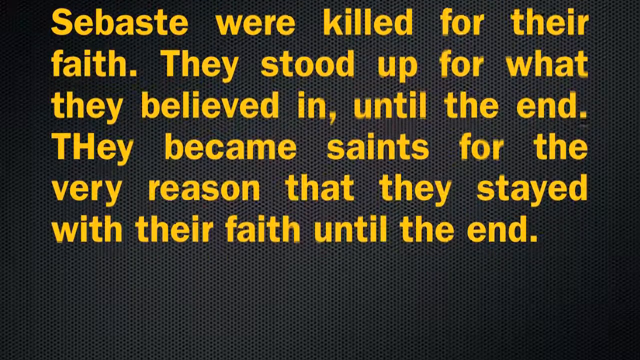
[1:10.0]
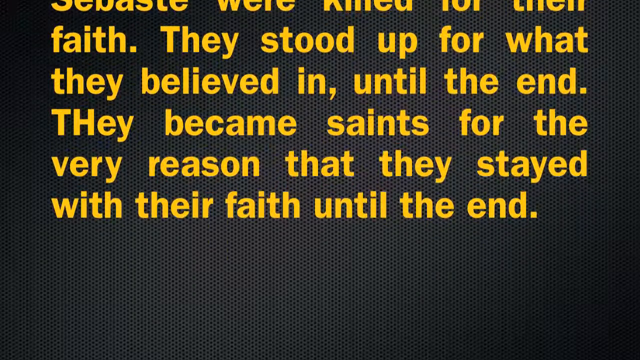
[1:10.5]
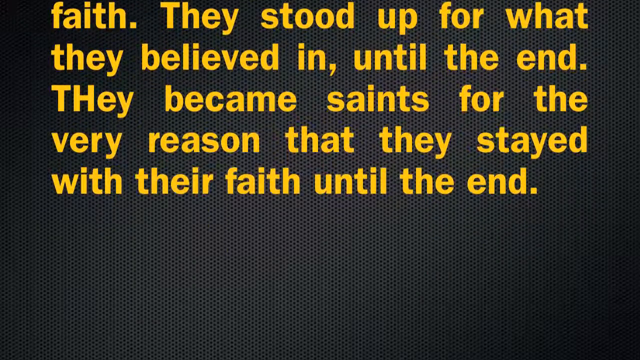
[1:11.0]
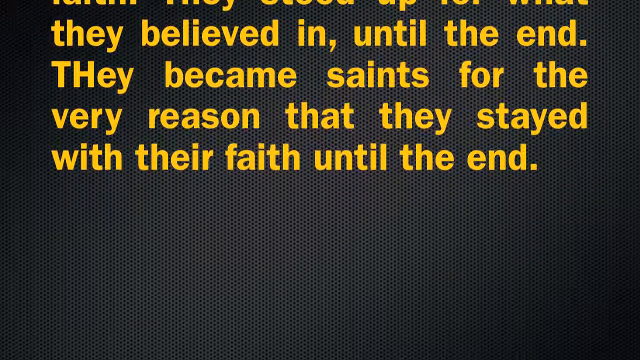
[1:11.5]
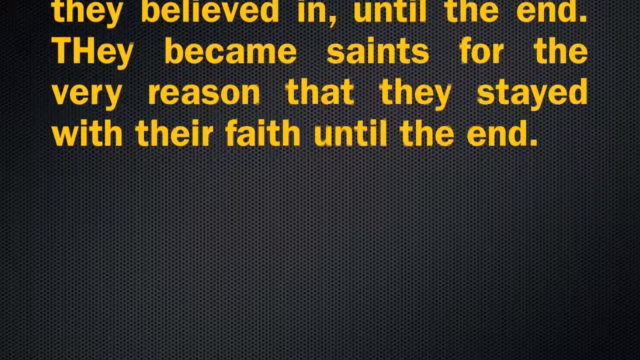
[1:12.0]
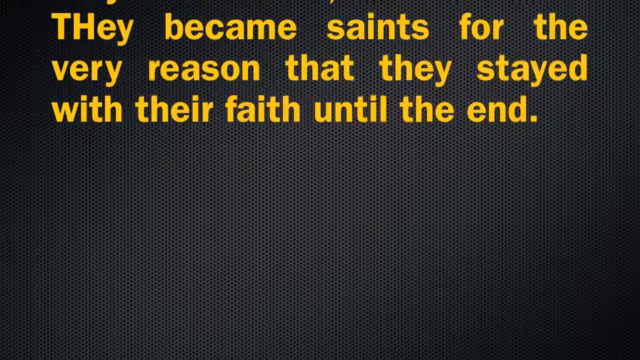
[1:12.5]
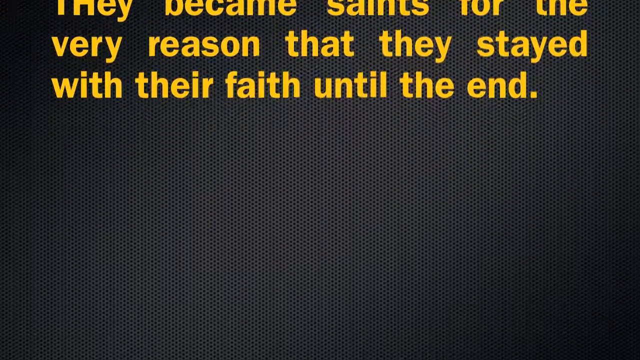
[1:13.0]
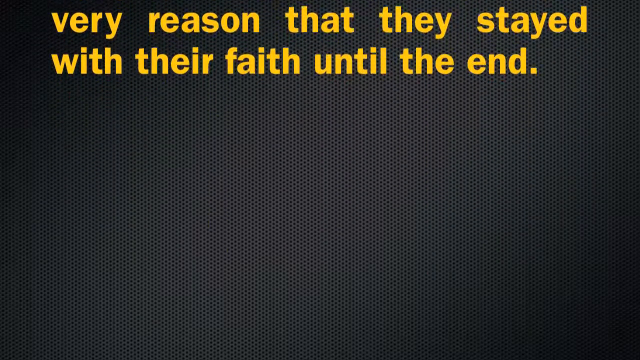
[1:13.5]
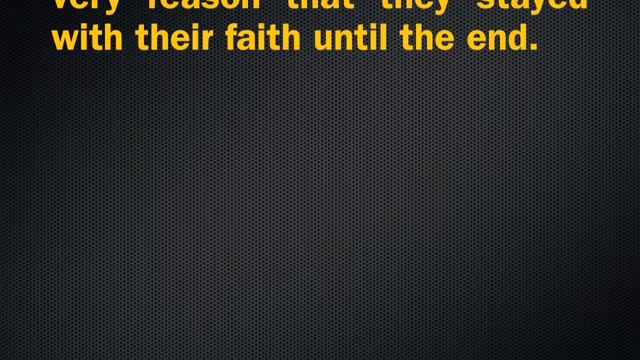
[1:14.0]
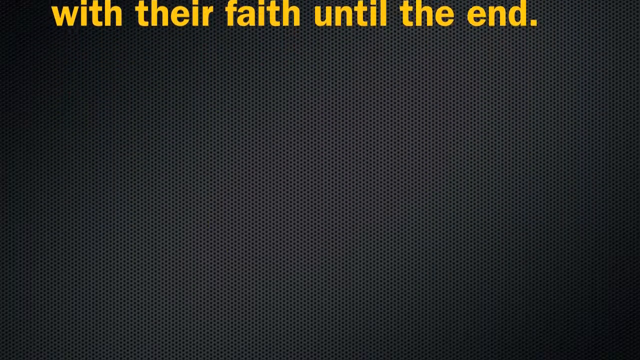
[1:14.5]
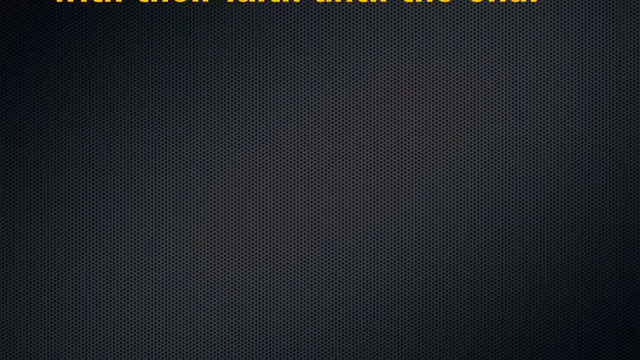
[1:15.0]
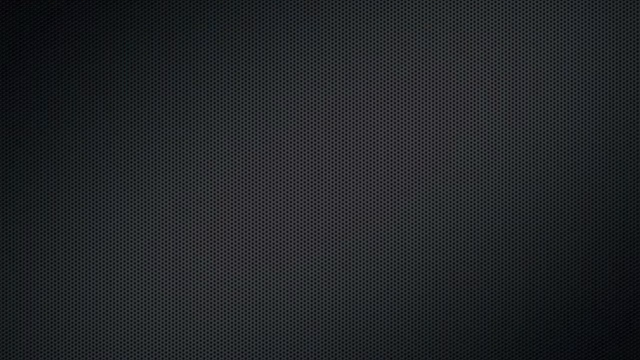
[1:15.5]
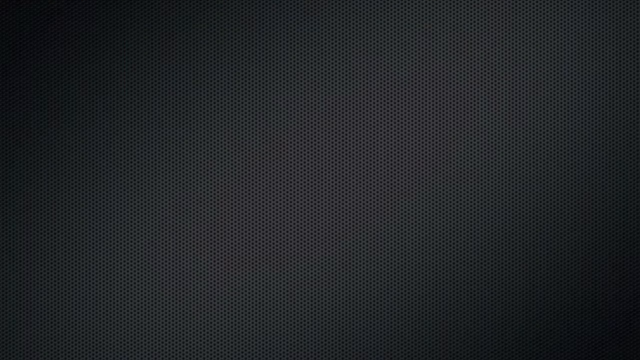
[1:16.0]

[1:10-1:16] The yellow captions continue to move upward and disappear off the screen, leaving only the background, which is an unusual style: a metallic, almost darker grey color with many black polka dots.